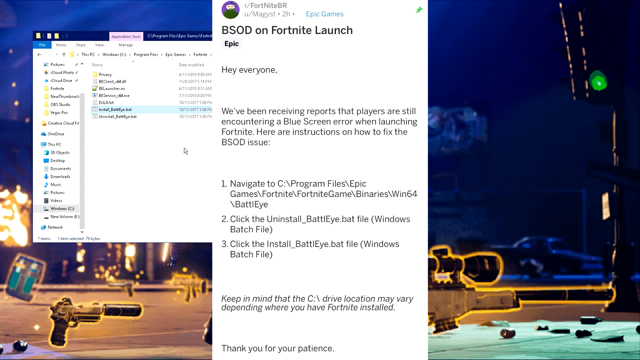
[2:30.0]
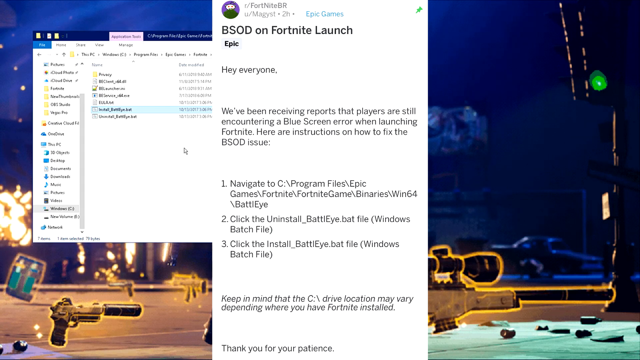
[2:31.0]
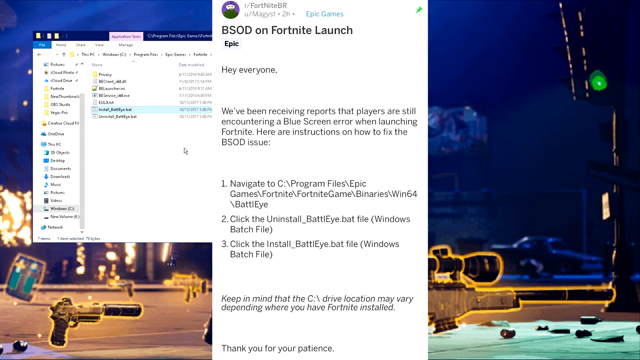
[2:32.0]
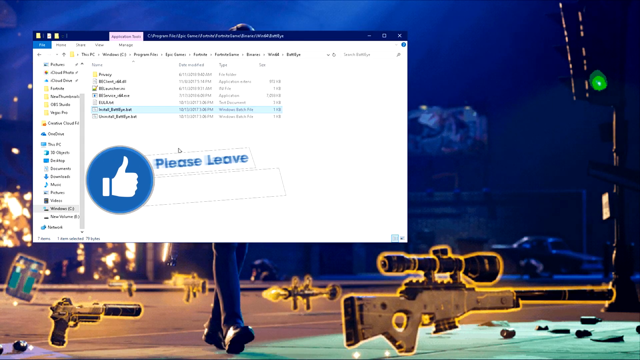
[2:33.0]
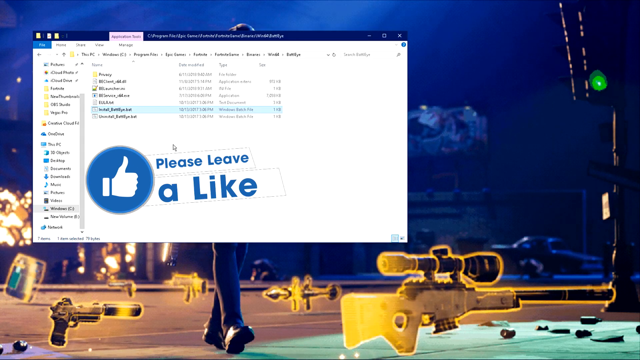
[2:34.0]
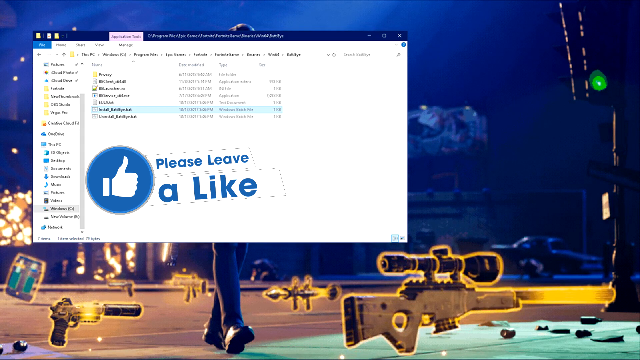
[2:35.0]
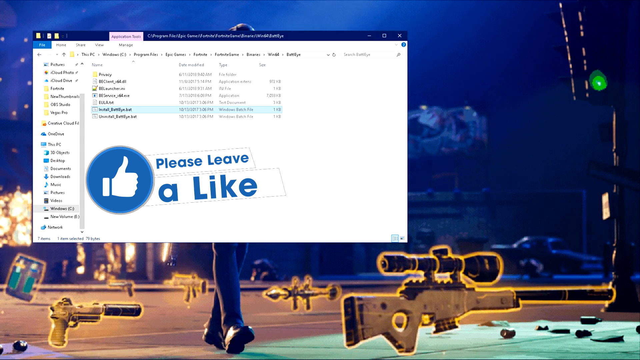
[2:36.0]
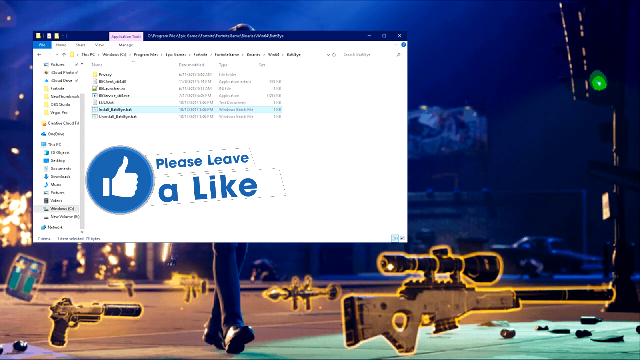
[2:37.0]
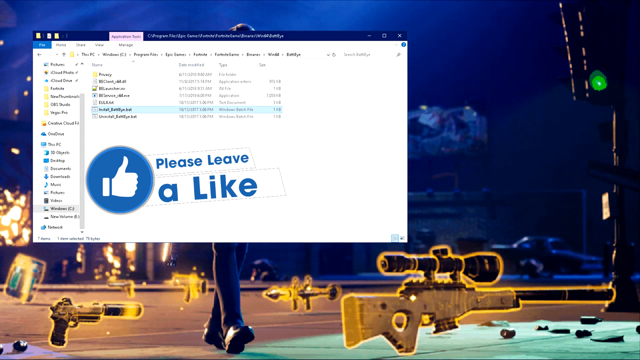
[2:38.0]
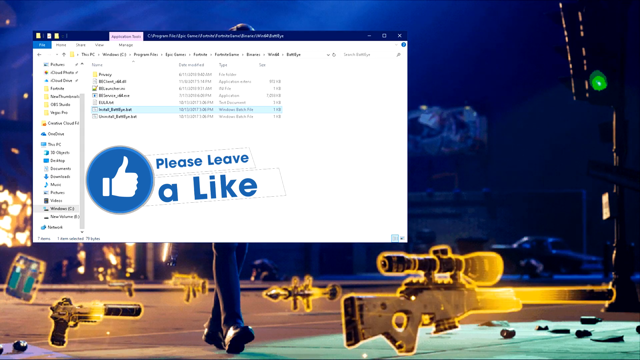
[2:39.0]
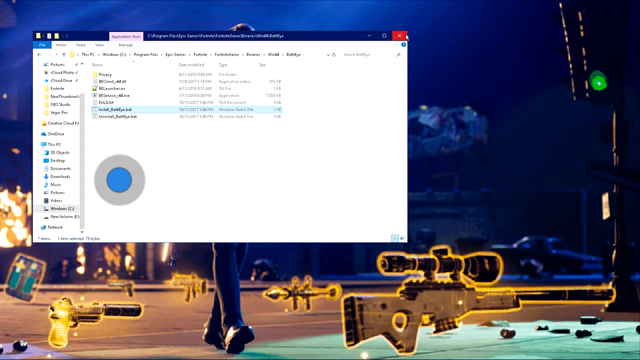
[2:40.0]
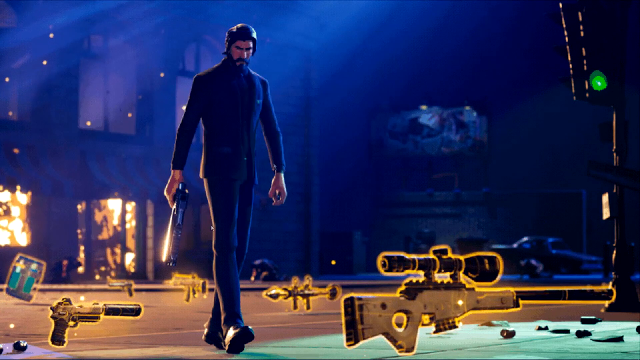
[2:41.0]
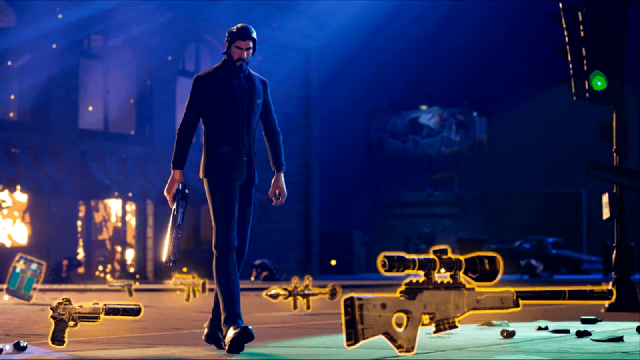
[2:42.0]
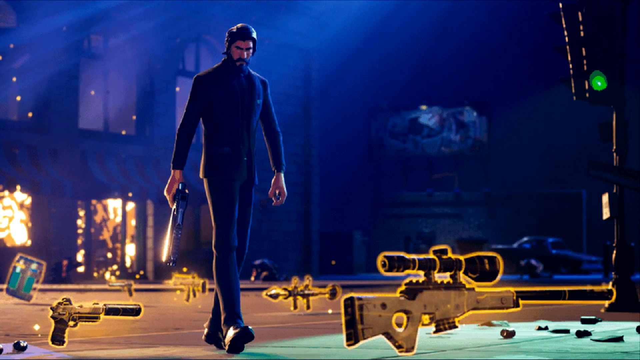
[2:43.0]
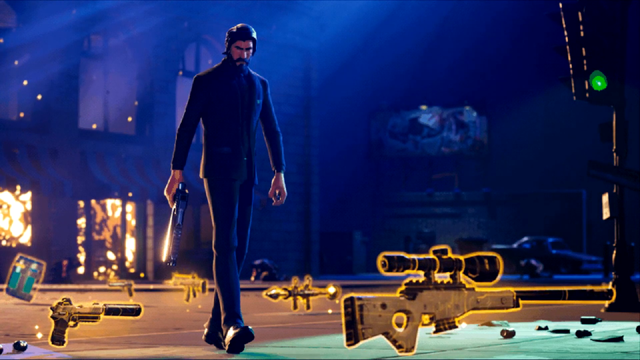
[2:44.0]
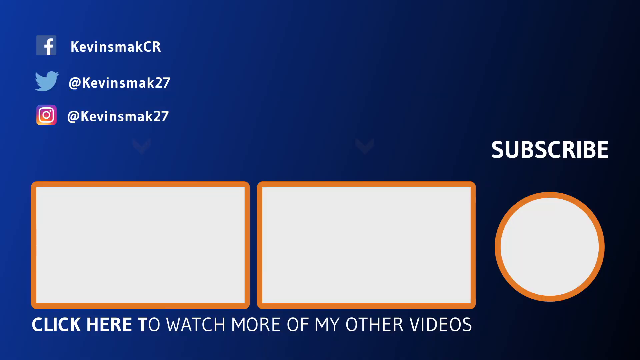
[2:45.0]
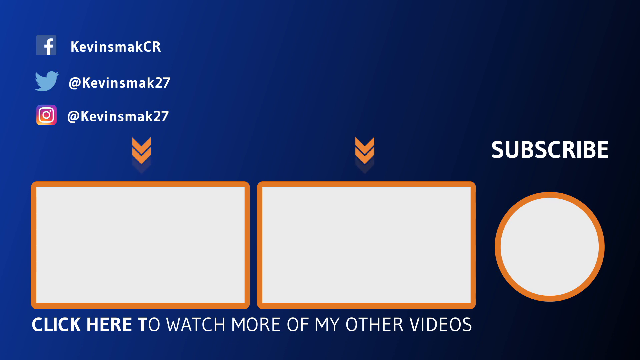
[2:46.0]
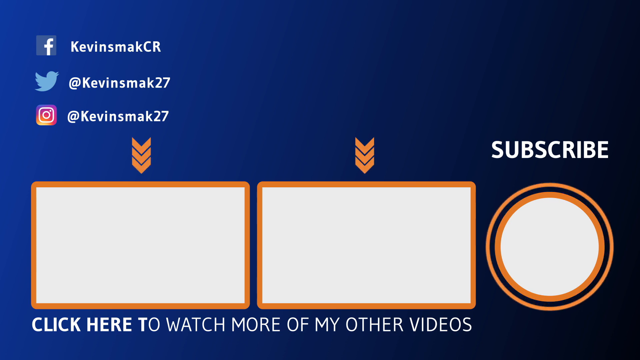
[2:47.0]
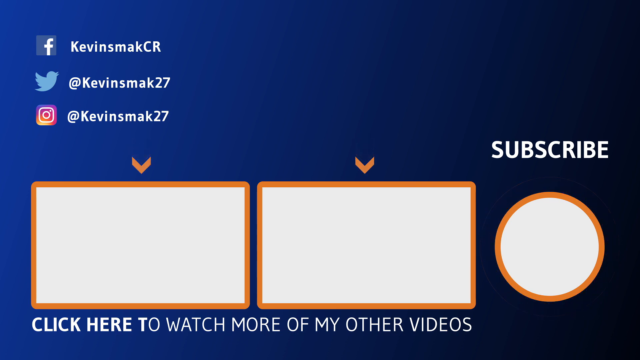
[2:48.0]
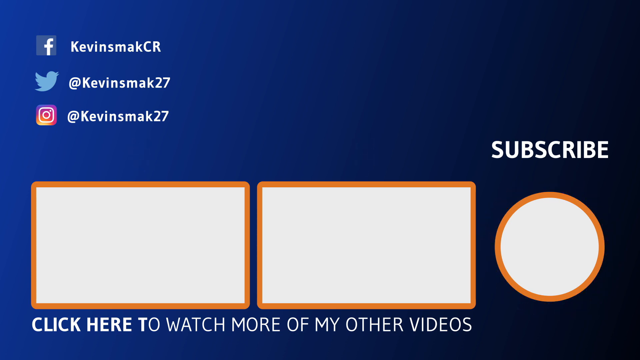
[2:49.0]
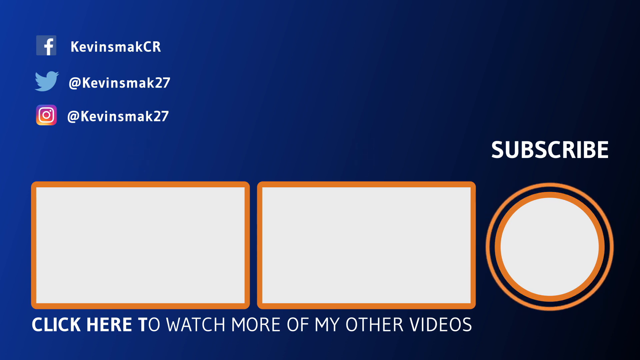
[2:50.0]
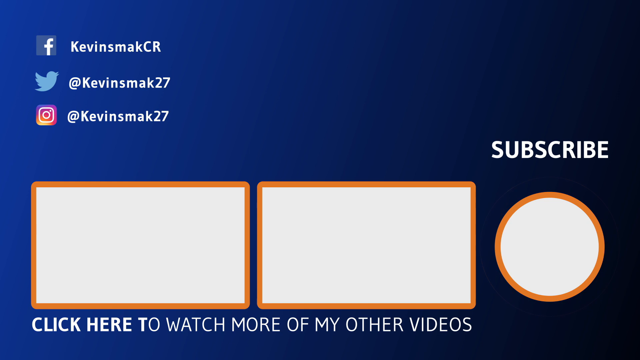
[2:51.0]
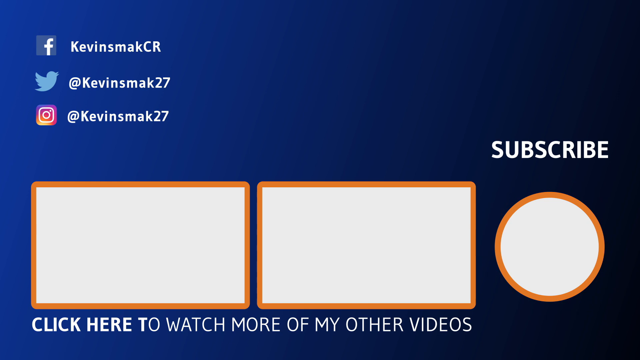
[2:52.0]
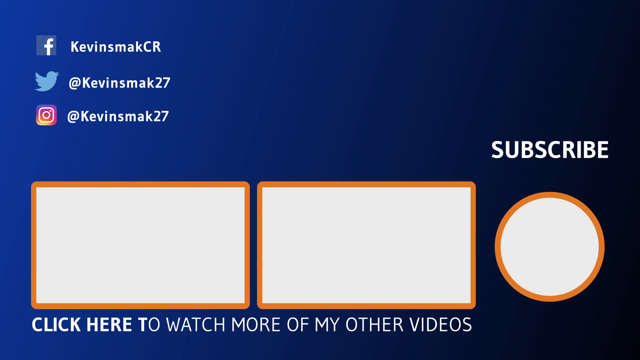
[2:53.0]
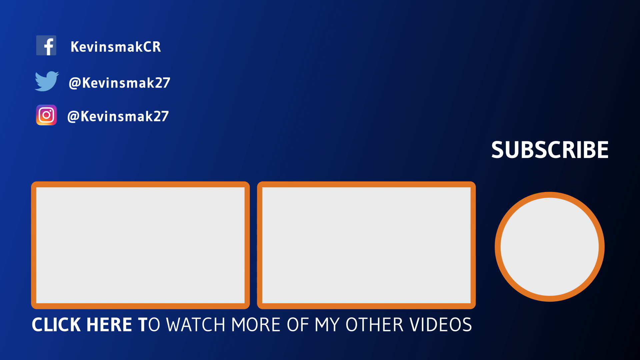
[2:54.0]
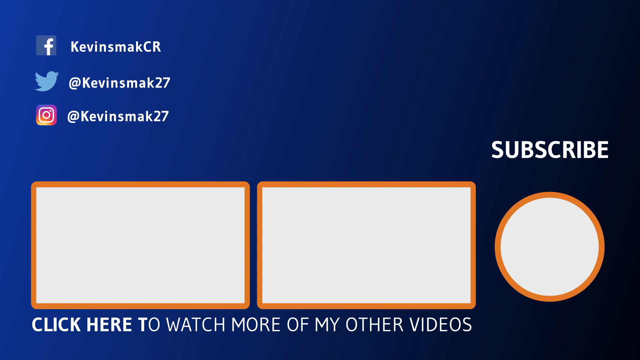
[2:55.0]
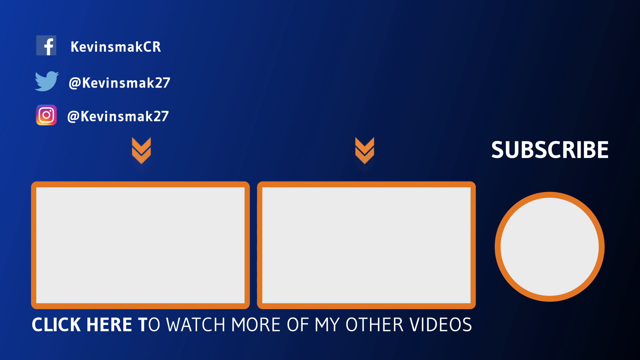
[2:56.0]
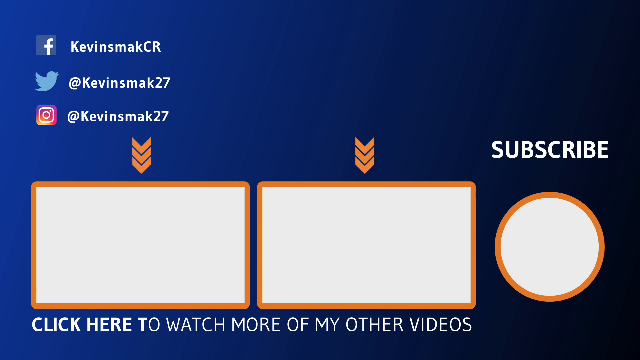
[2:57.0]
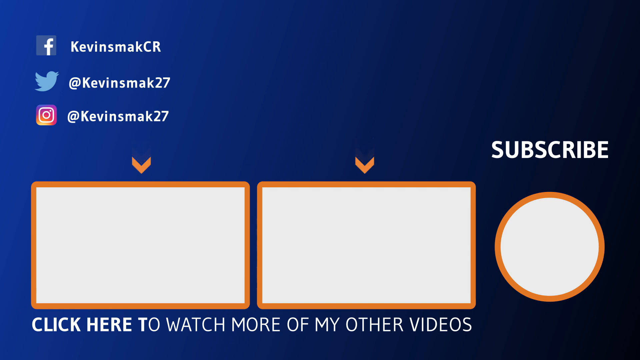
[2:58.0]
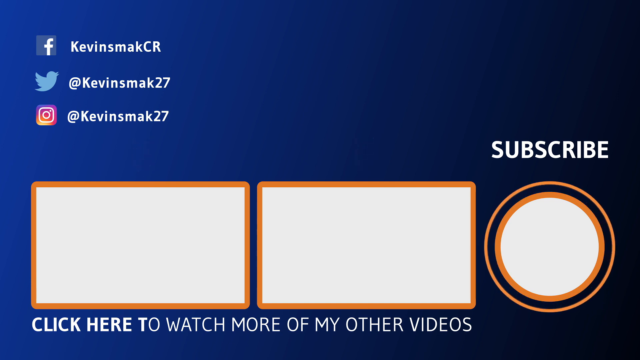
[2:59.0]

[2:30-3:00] A message is on the screen, then it disappears and a white thumbs up with a blue circle appears alongside blue words reading "please leave a like" on the left side of the screen, towards the middle. The background of the John Wick or action video game man with the guns is still there, and the window with the files remains up. After the "please leave a like" message disappears, the background shows the action character standing with a gun in his right hand pointed downwards, and the man is also looking downwards. The view then pans to a different window with the YouTuber's socials: Facebook, Twitter and Instagram, a subscribe button, and a place that says to click to watch other videos. These have white backgrounds with orange outlines, and the subscribe button has an animated circular outline that animates out towards the edges.